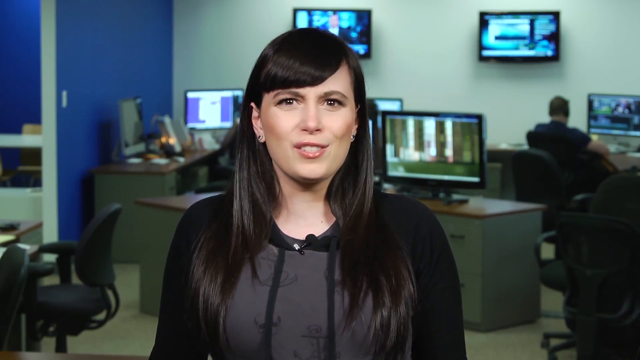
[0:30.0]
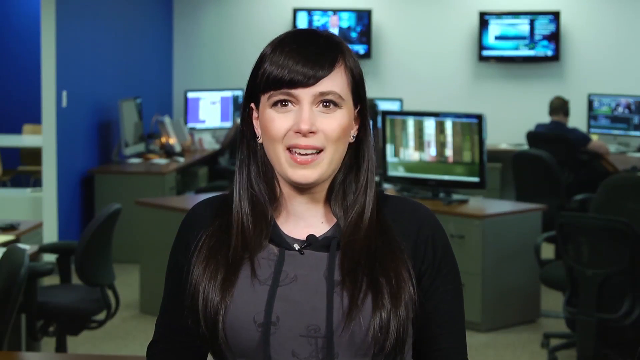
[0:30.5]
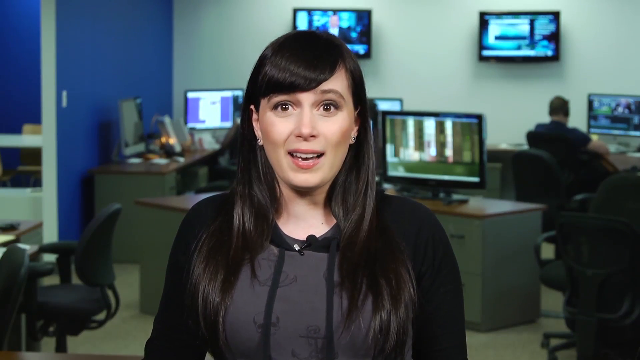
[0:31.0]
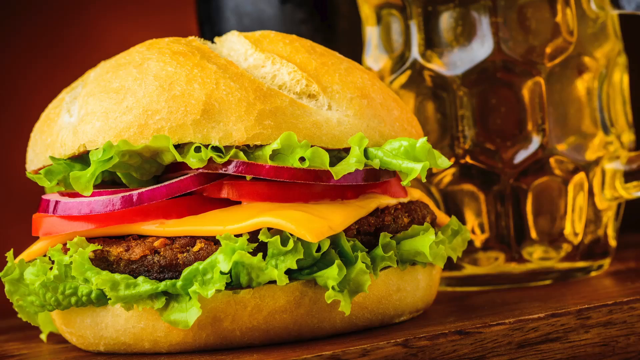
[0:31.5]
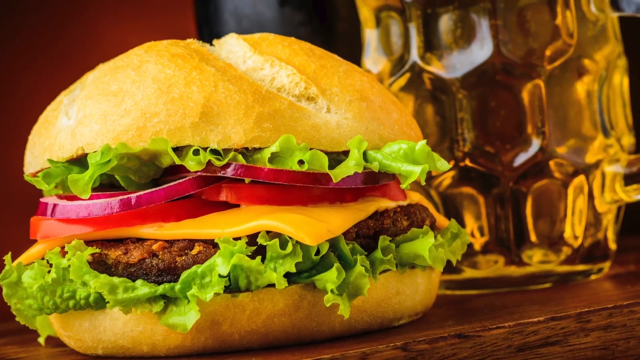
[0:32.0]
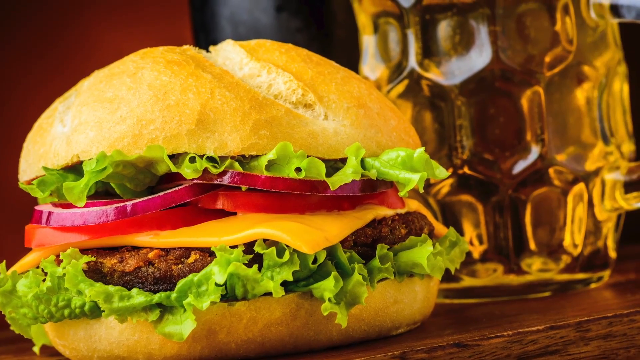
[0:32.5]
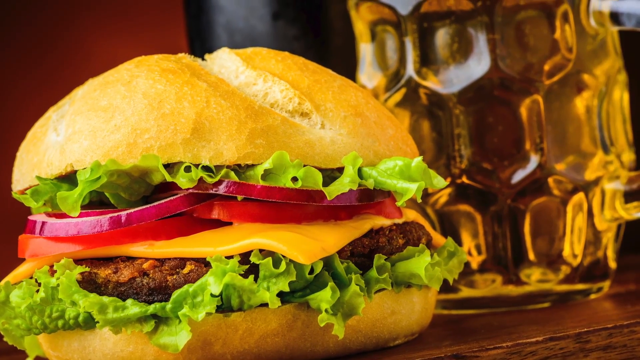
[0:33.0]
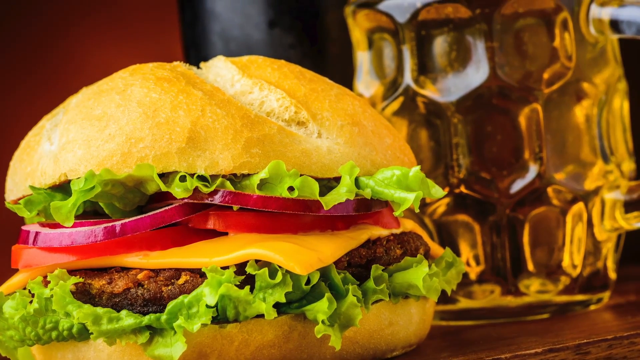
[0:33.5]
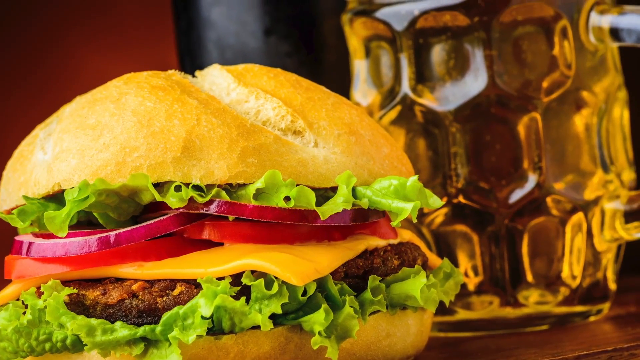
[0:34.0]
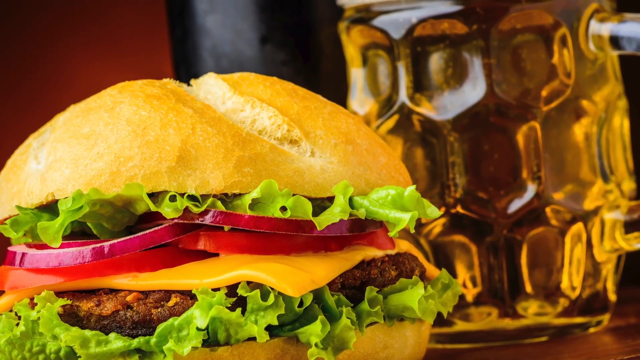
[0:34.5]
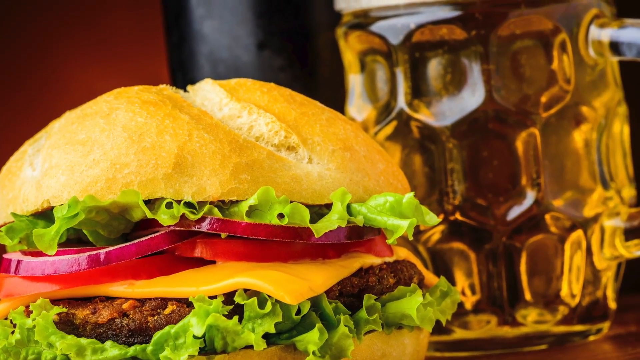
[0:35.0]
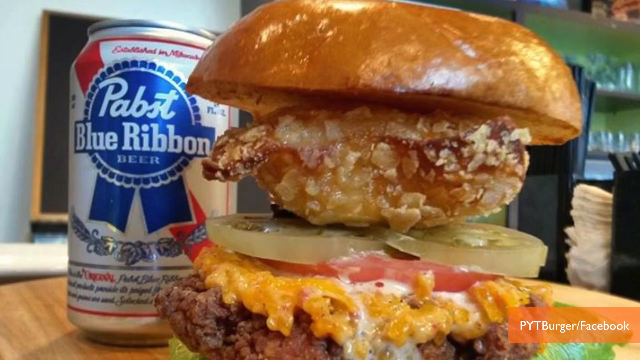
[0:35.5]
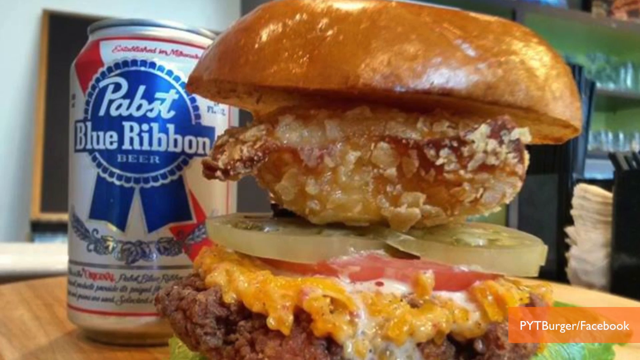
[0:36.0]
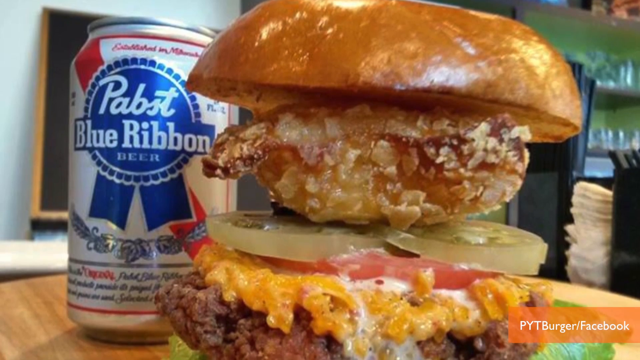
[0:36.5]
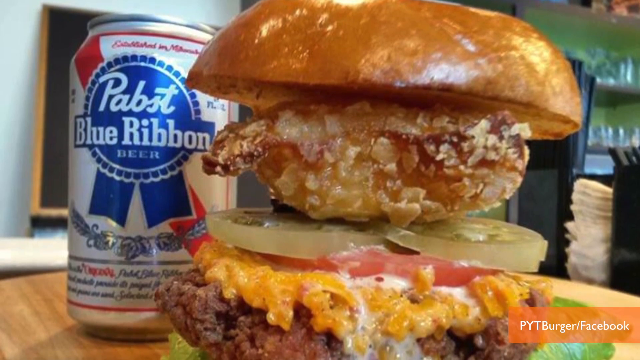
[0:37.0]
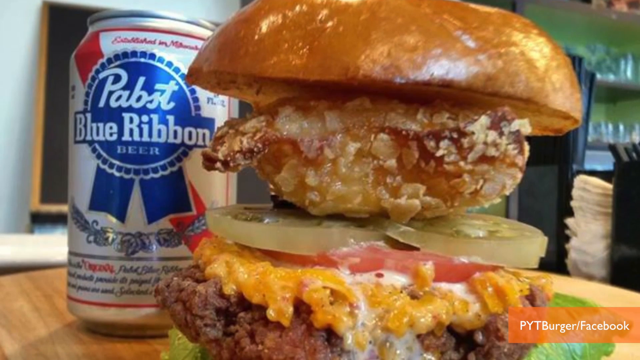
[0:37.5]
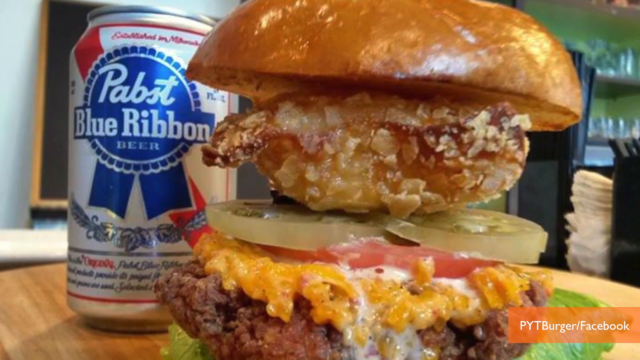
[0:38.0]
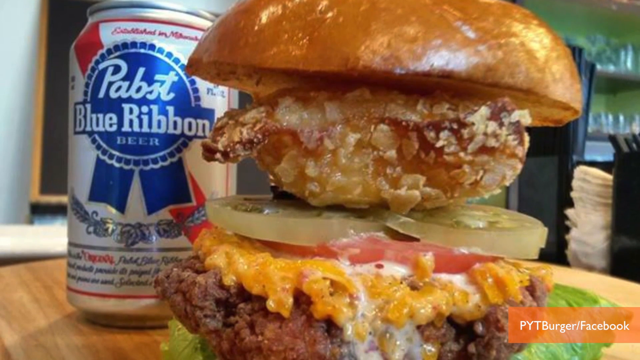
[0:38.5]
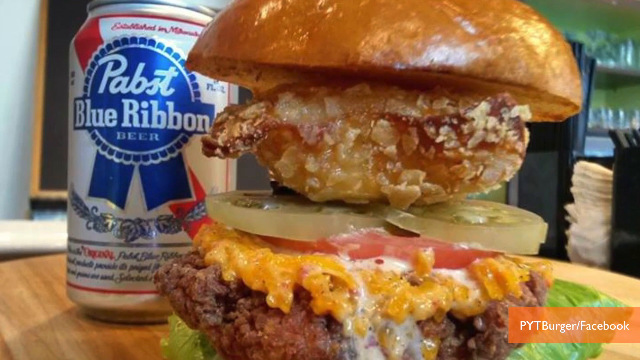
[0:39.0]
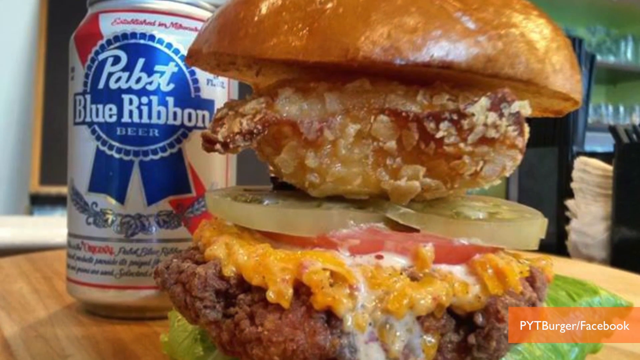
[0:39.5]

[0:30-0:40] A woman talks in an office setting, with people working on monitors behind her and monitors attached to the wall. Next, a hamburger is shown next to a mug of beer; it has cheese, lettuce, tomatoes and some ketchup, with lettuce on both the bottom and the top. Then a burger that looks different because it is so tall appears; it looks like it may have an onion ring or something puffy on the very top, and it is sitting next to a Pabst Blue Ribbon beer. The woman comes back on screen and says something, and then both hamburger displays are shown again in slightly shorter clips.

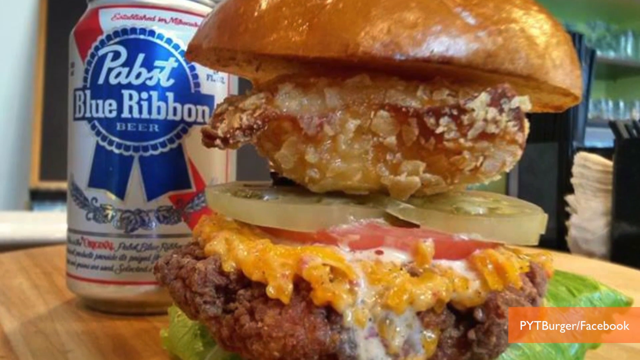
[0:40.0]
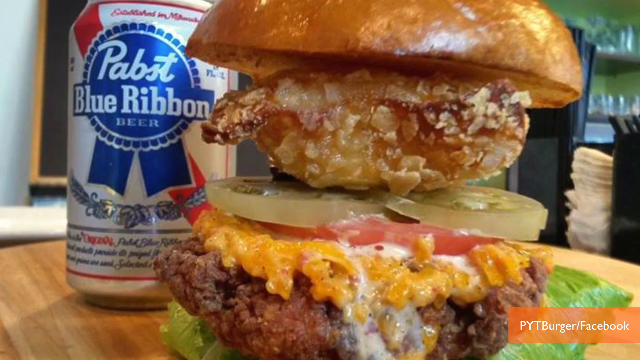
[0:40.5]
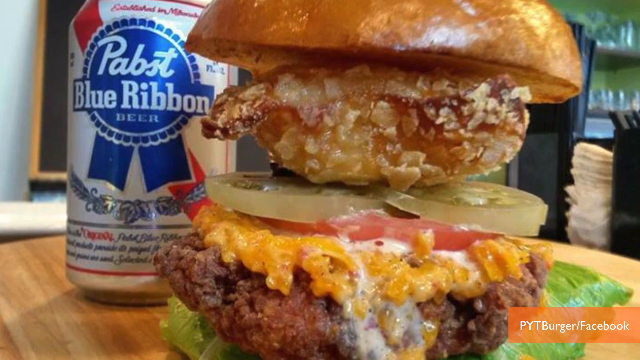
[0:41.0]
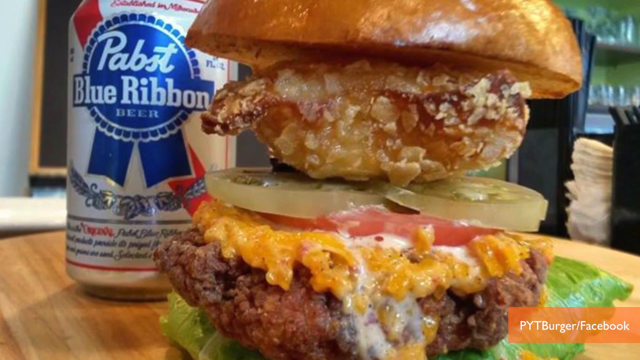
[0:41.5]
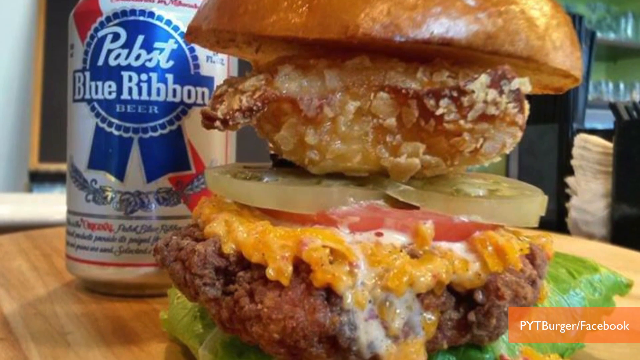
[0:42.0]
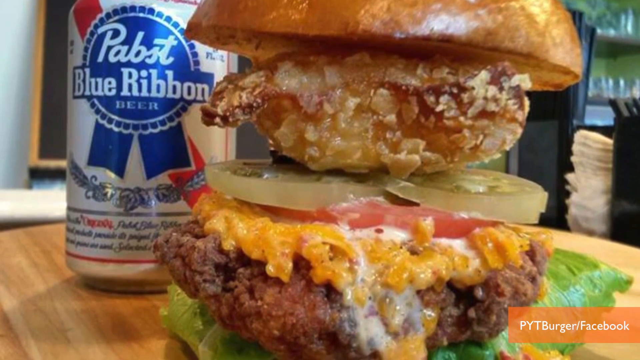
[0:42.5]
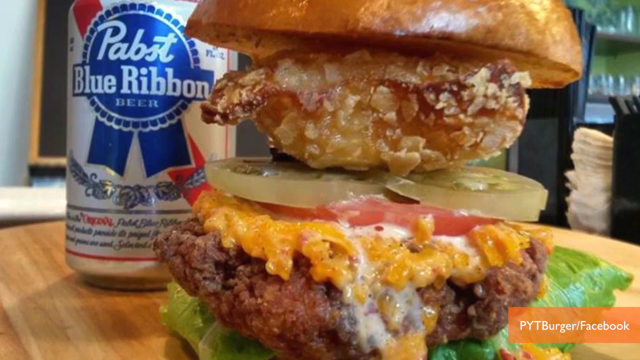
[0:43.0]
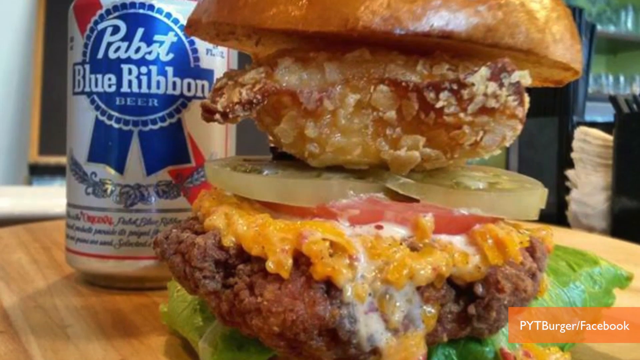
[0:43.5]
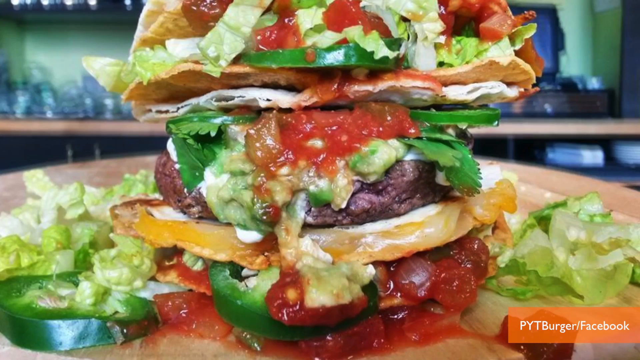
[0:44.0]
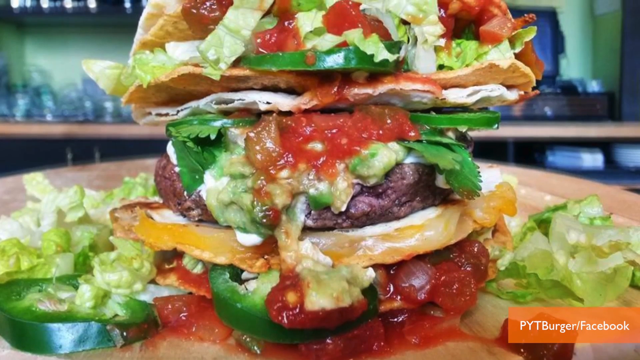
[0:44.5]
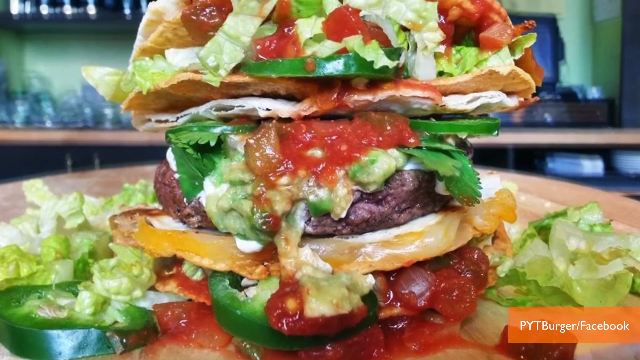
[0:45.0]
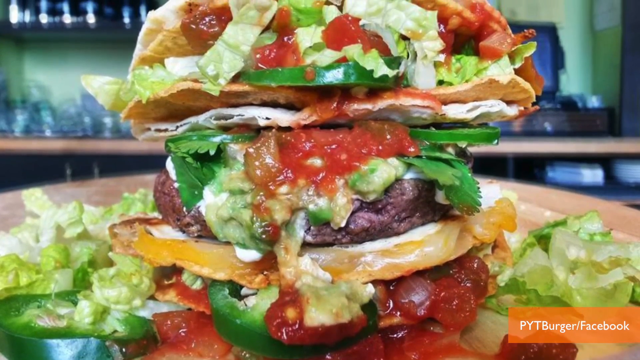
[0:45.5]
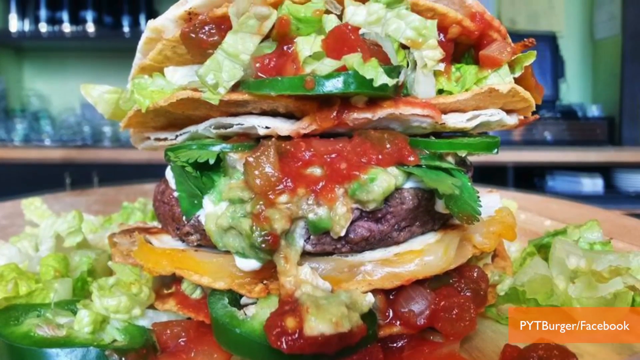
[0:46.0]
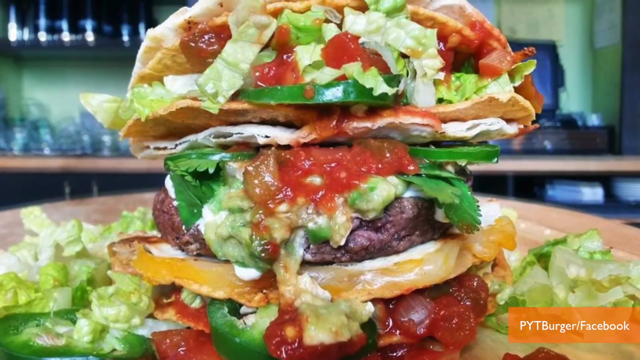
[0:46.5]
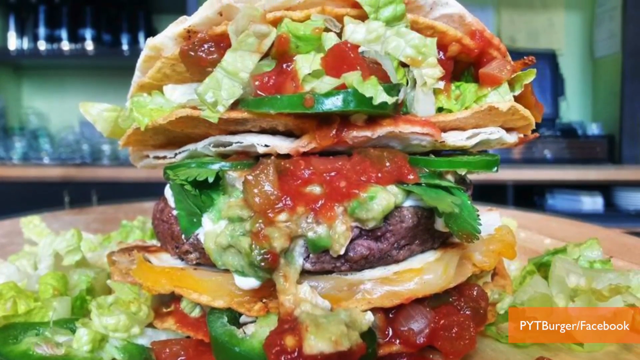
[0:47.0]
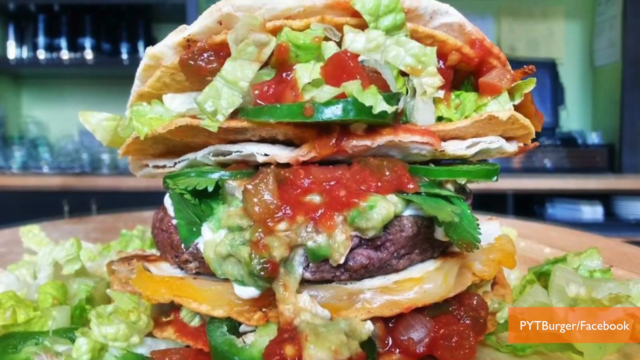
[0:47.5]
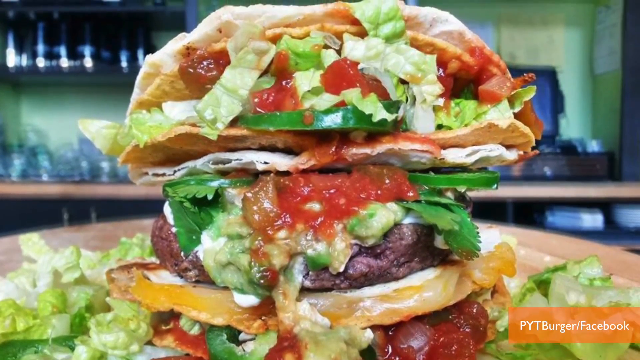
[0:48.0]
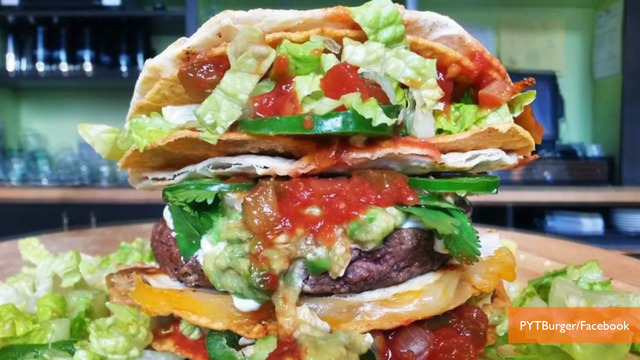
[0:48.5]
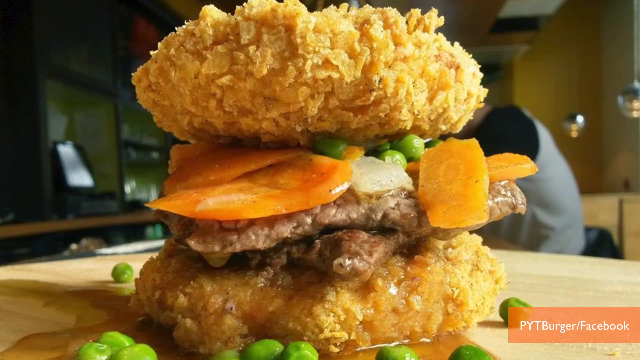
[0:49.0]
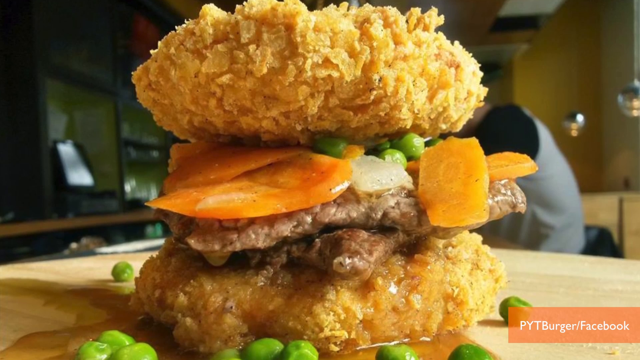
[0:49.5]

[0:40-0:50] An enormous hamburger is shown with tomatoes, cheese, a patty, lettuce on the bottom and some sort of puffy fried thing that could be an onion ring or a toasted bun. It is sitting next to a Pabst Blue Ribbon beer on a wood table, with glasses in the background, in a restaurant. Next comes a messy hamburger that is very, very tall with ketchup thrown all over it; it looks like a mess, the bun is barely visible, and there is lettuce all around the plate it is sitting on.